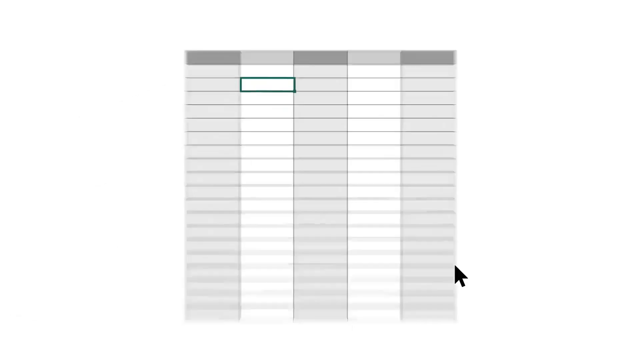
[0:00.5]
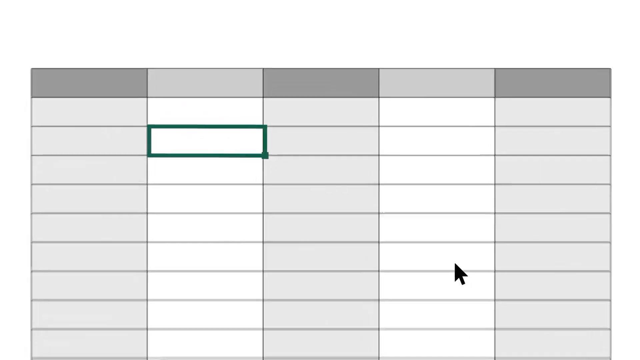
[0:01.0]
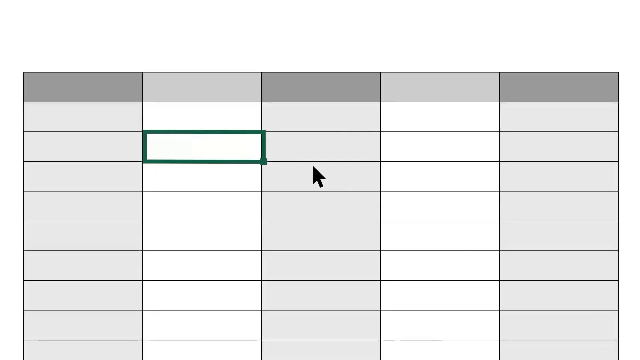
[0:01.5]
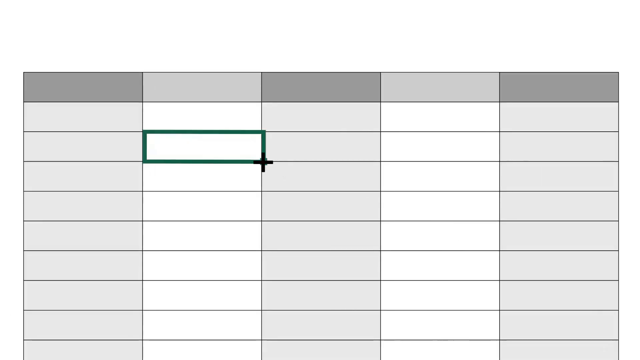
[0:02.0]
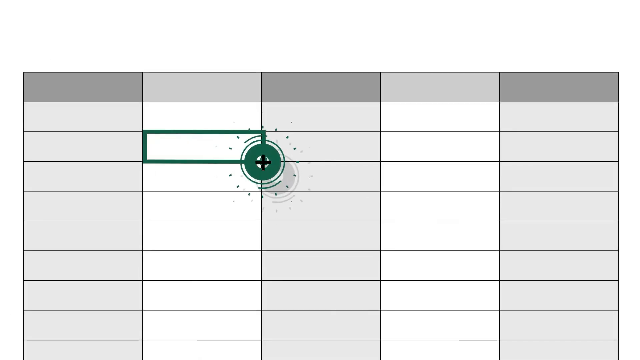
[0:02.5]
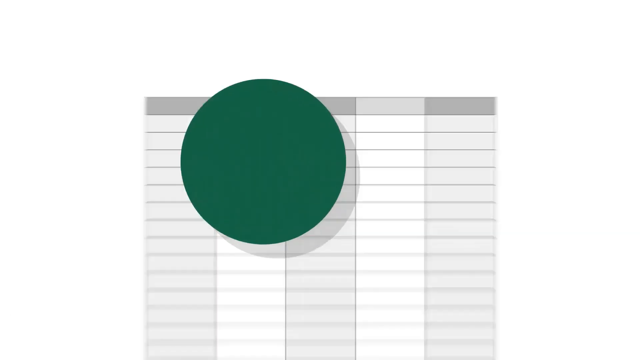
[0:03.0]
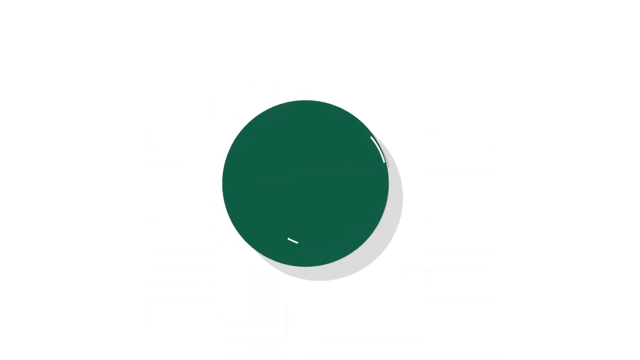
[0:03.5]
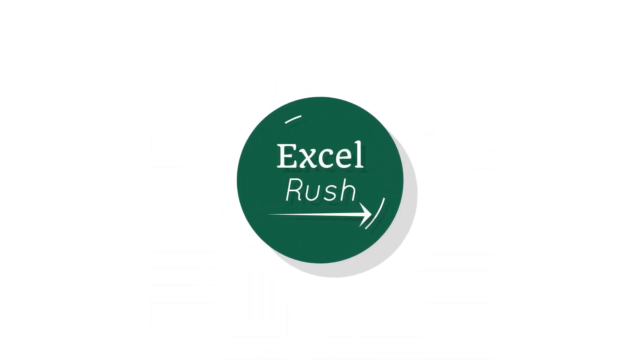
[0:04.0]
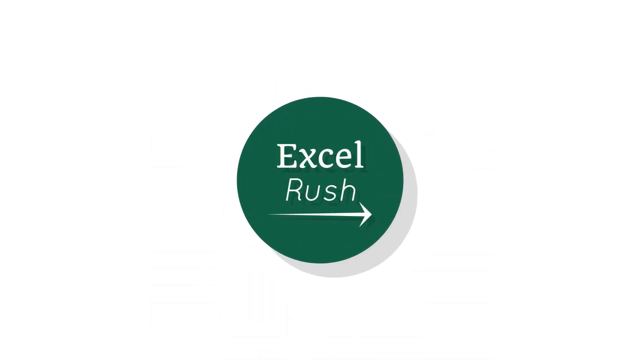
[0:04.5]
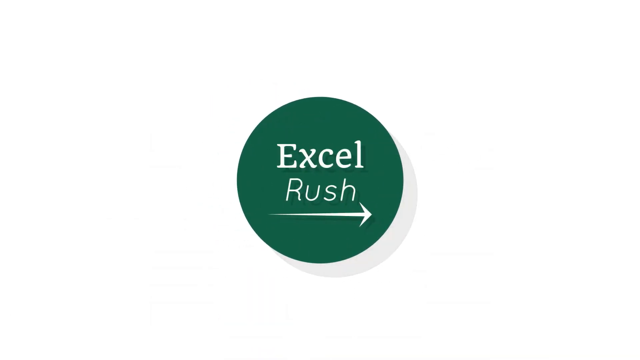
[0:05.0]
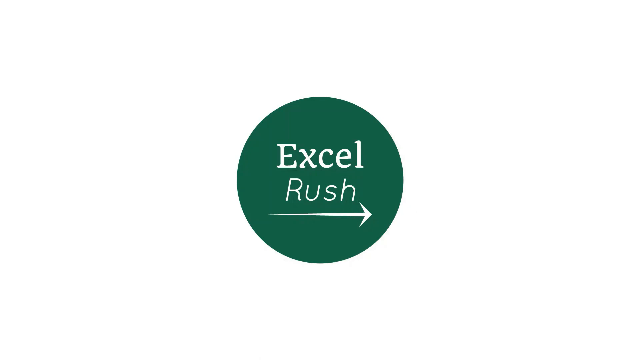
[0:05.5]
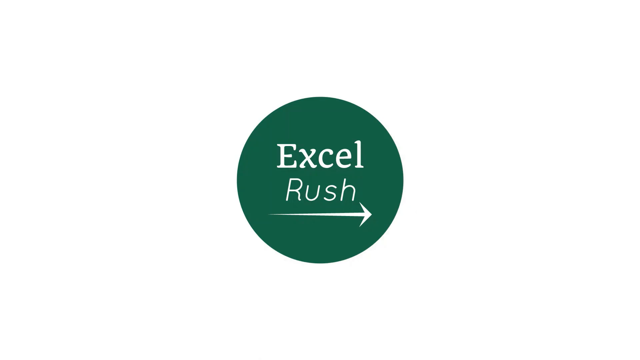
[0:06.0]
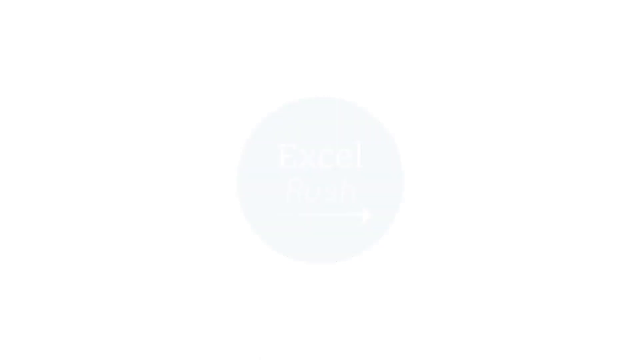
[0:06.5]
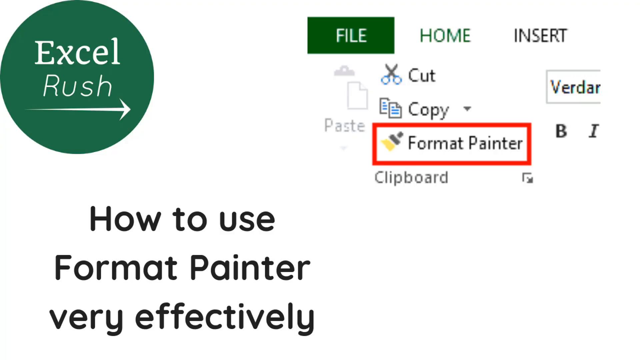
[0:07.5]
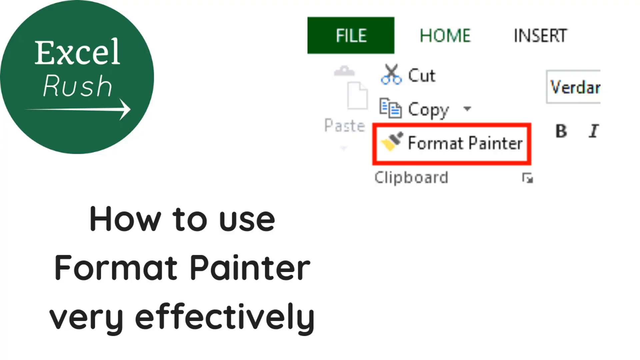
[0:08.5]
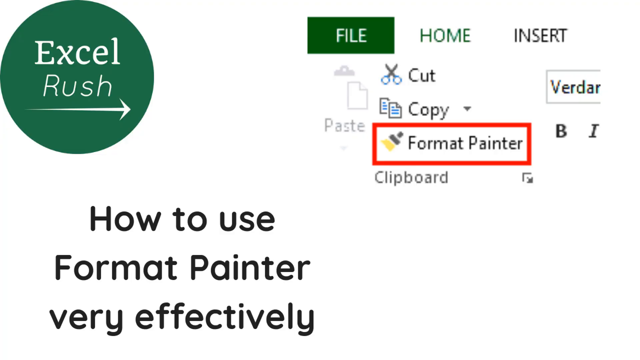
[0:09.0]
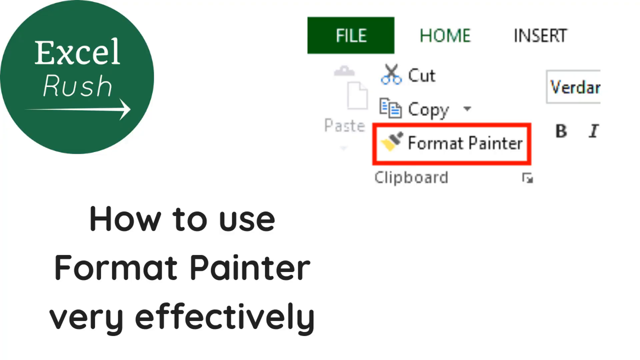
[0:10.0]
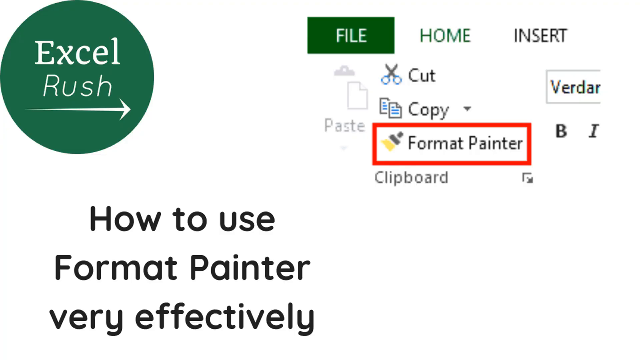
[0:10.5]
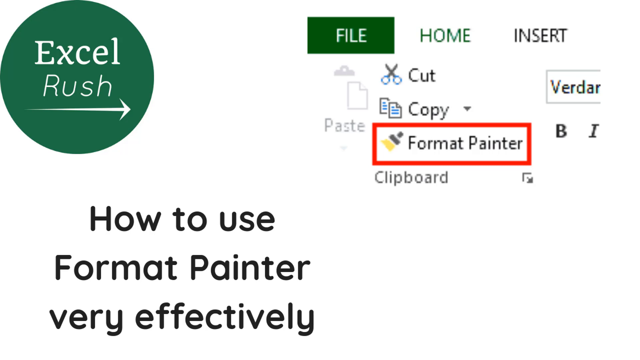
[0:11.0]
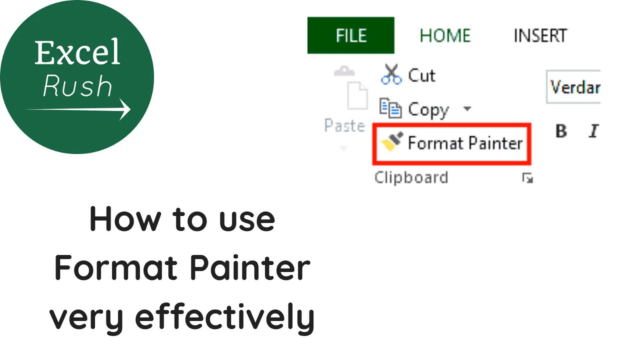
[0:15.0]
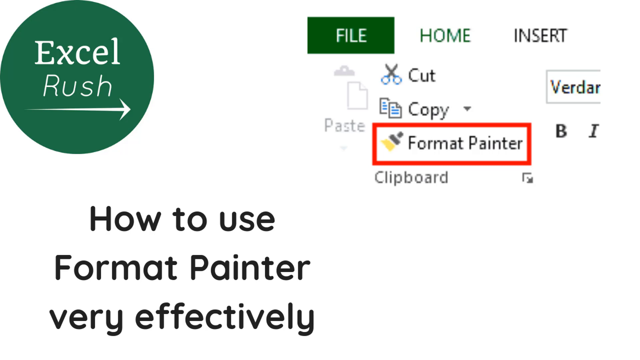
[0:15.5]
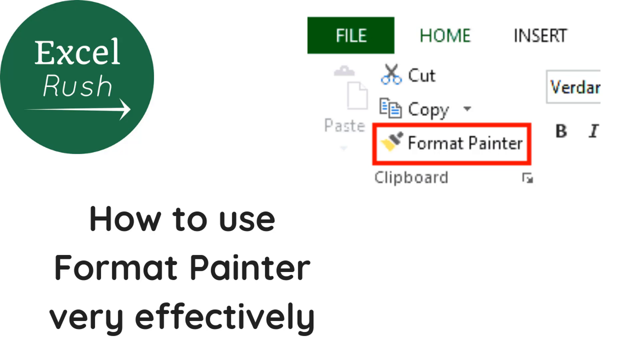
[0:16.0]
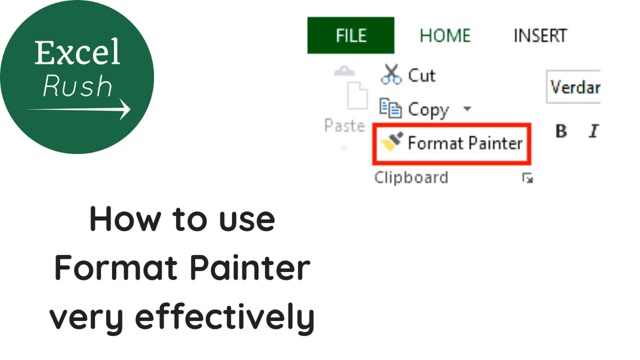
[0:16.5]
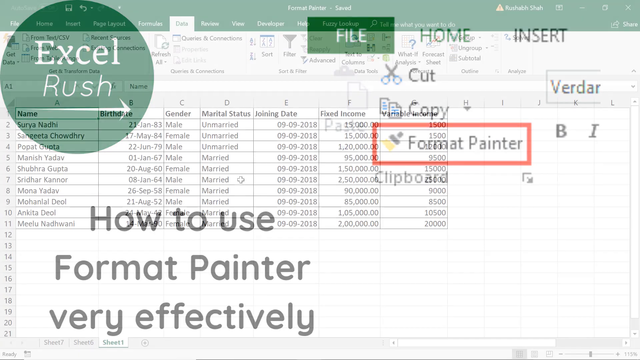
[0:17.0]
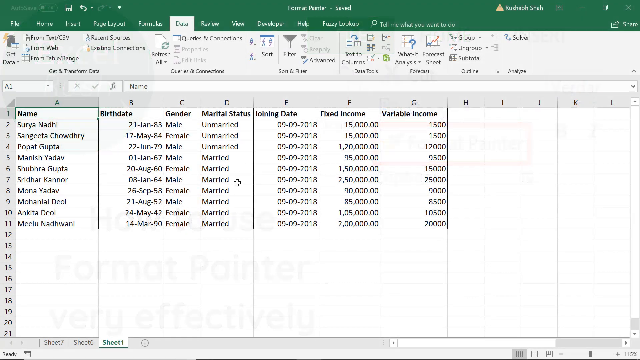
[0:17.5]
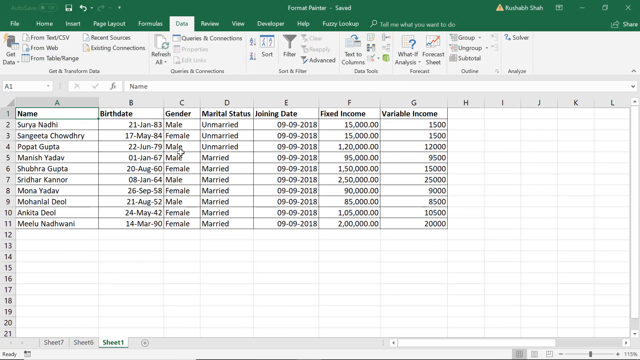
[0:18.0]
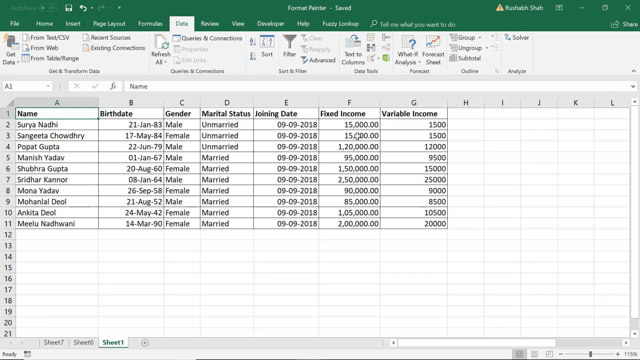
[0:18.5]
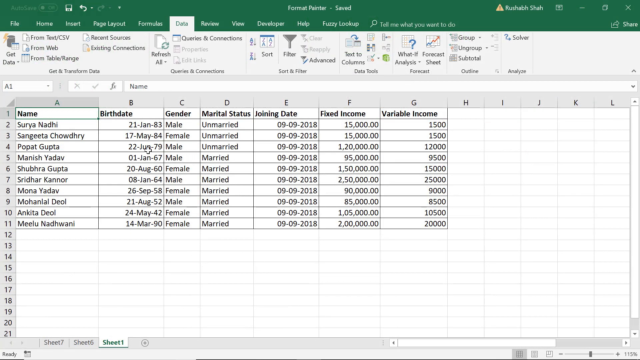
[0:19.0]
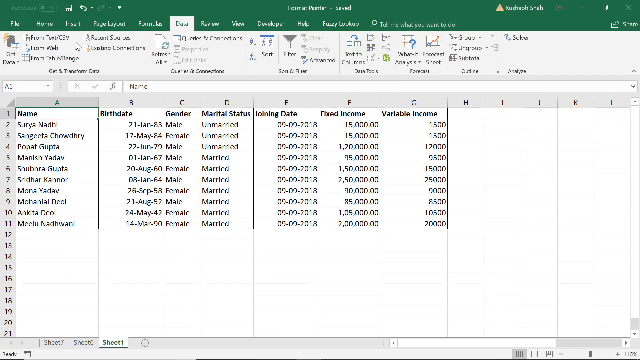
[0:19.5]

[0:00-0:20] Someone appears to be opening an Excel file. A title in a green circle reads "Excel Rush", with the words written in white and a white arrow underneath pointing to the right. An instruction reads "how to use Format Painter very effectively". Format Painter on the Options menu in Excel is shown in the top right, outlined in a red square to make it easier to find. What looks like an Excel page then opens, with Format Painter listed at the top, and a spreadsheet opens toward the mid to bottom of the page.